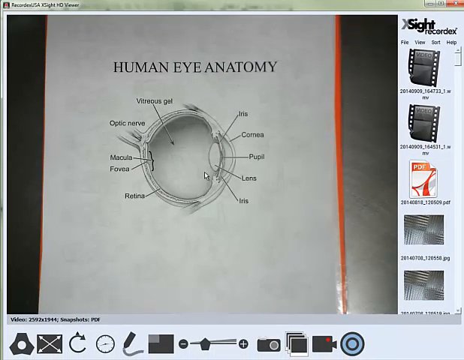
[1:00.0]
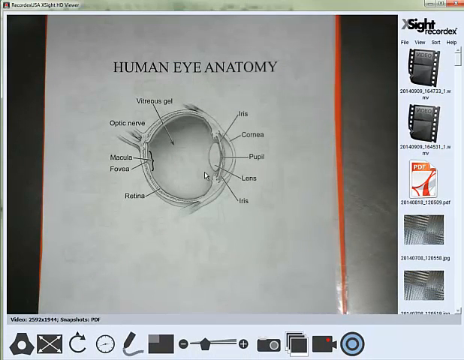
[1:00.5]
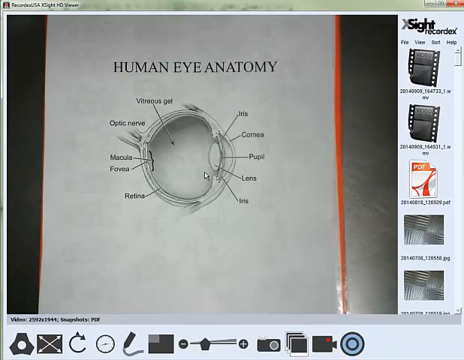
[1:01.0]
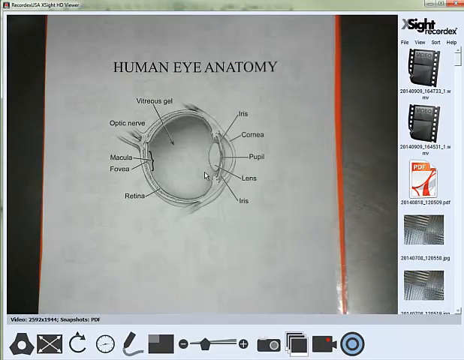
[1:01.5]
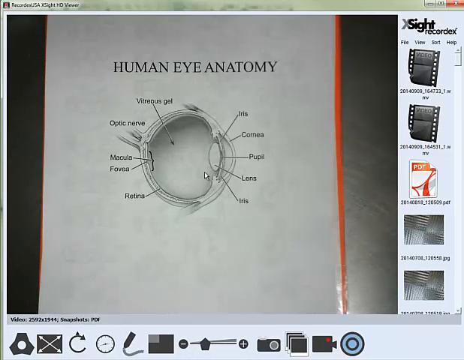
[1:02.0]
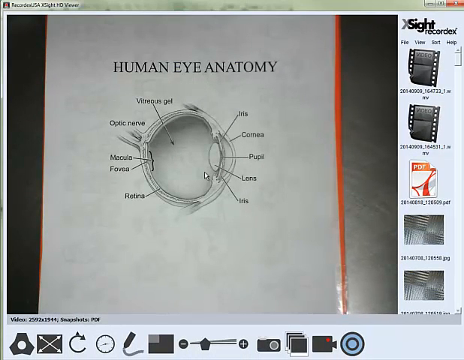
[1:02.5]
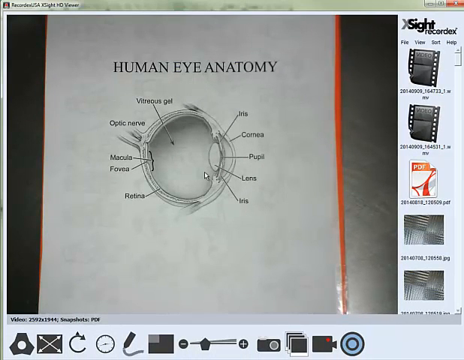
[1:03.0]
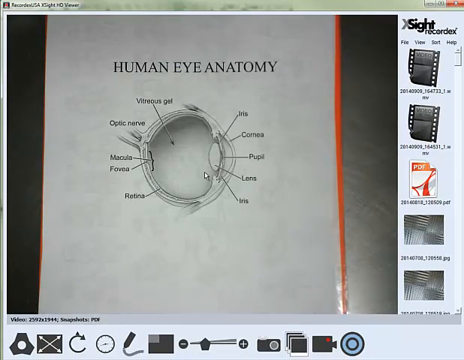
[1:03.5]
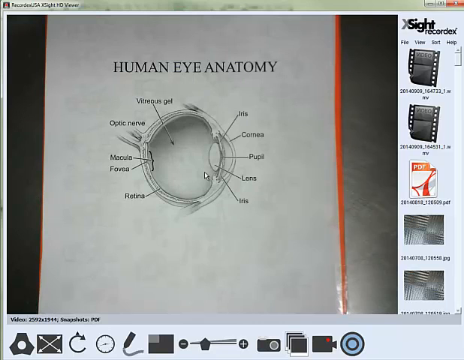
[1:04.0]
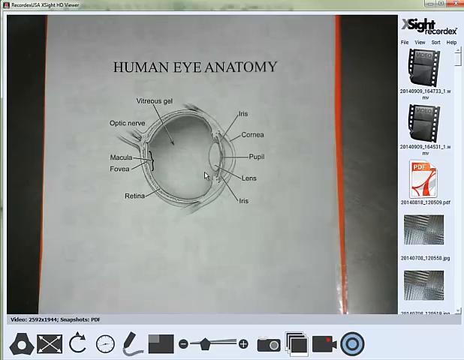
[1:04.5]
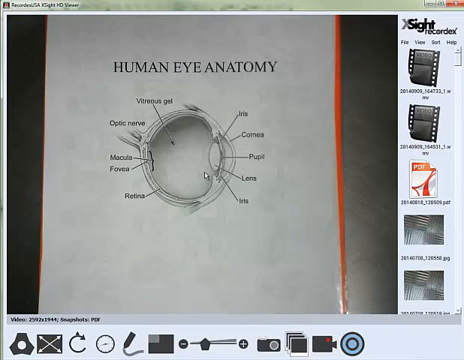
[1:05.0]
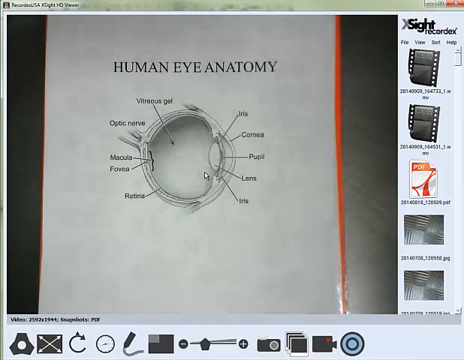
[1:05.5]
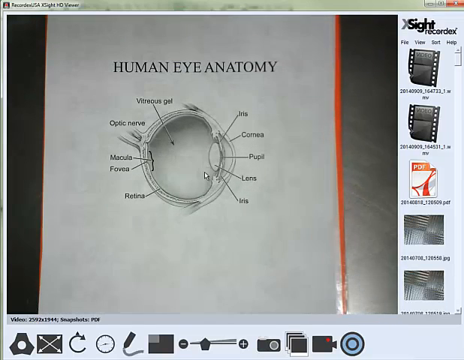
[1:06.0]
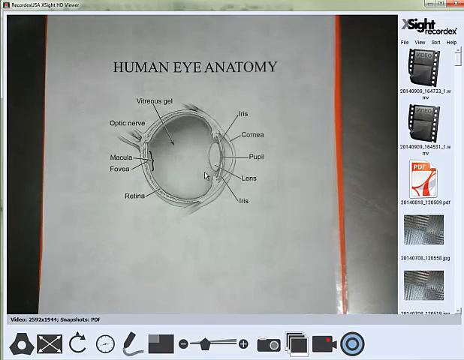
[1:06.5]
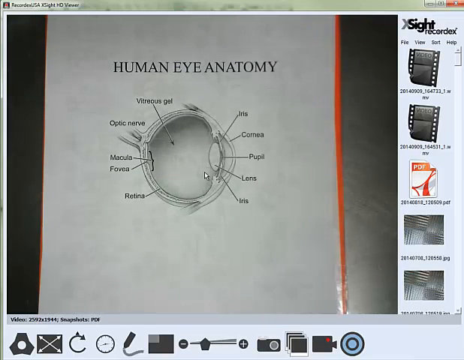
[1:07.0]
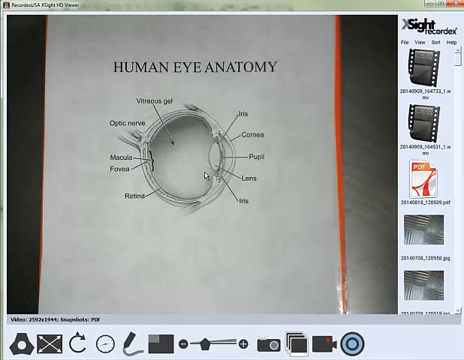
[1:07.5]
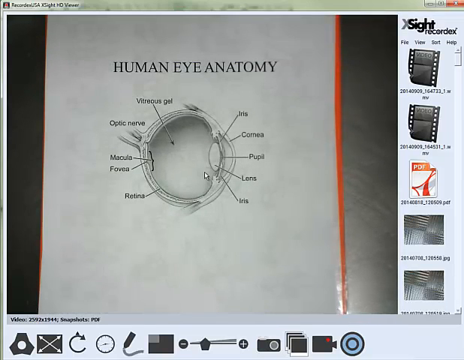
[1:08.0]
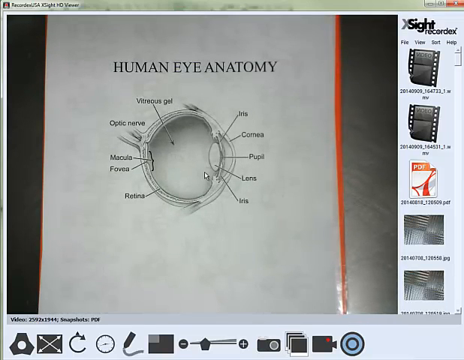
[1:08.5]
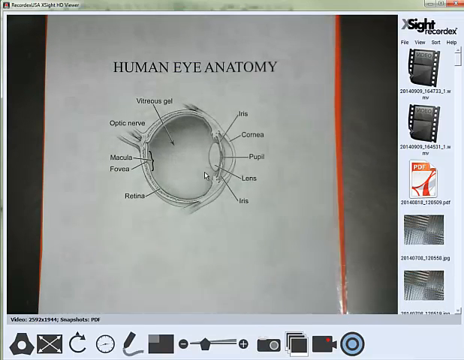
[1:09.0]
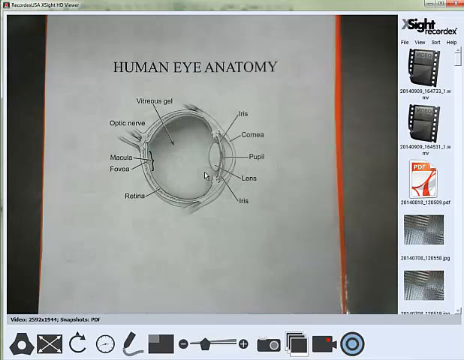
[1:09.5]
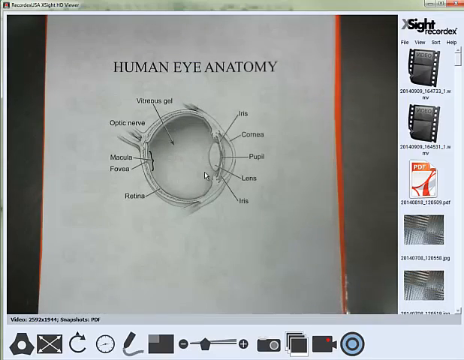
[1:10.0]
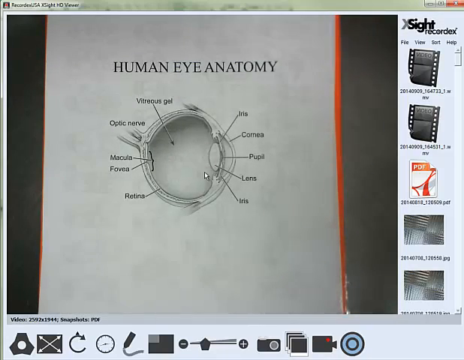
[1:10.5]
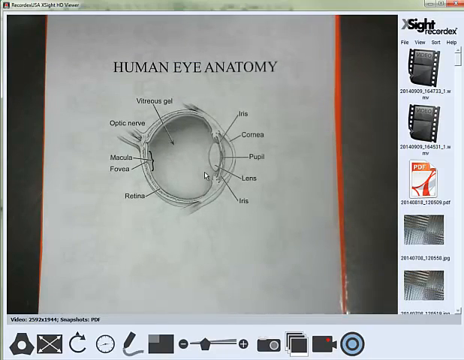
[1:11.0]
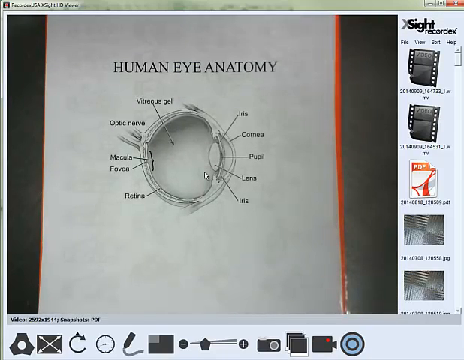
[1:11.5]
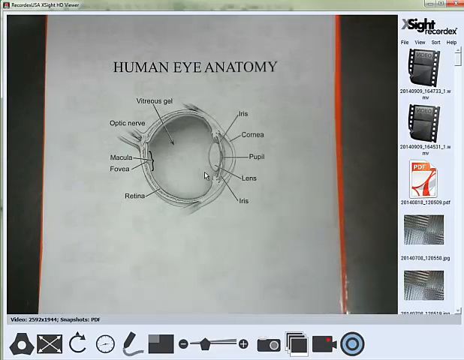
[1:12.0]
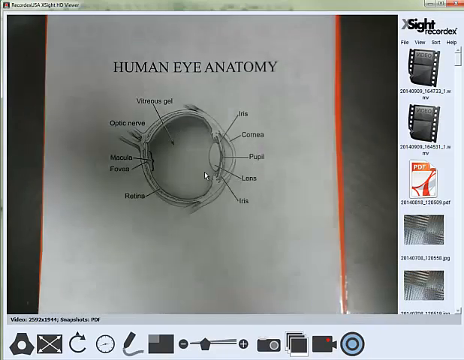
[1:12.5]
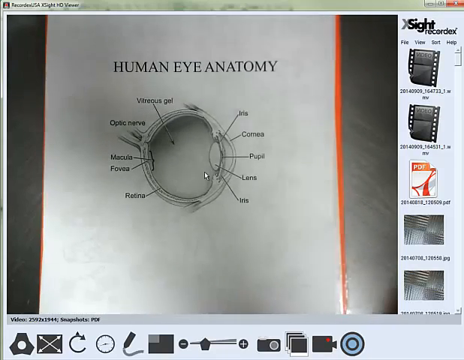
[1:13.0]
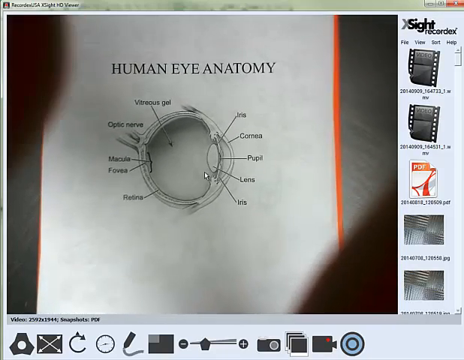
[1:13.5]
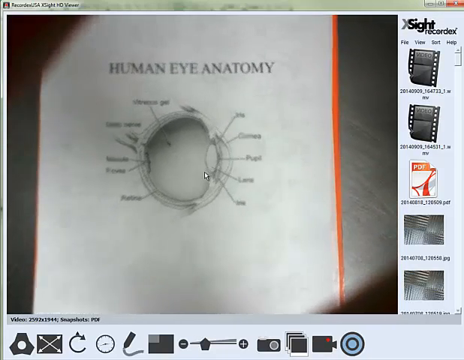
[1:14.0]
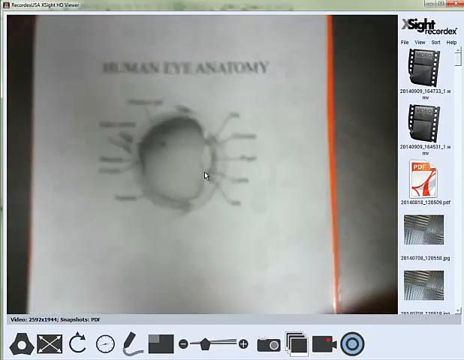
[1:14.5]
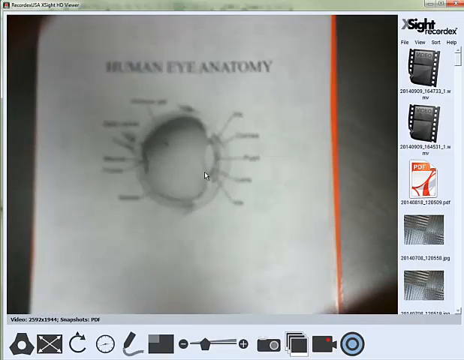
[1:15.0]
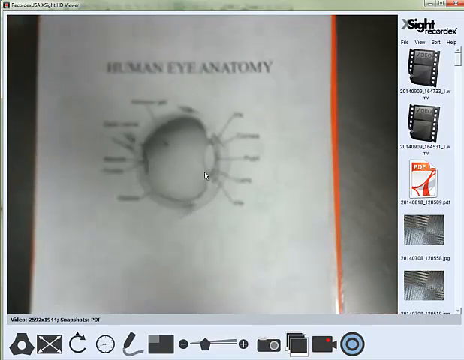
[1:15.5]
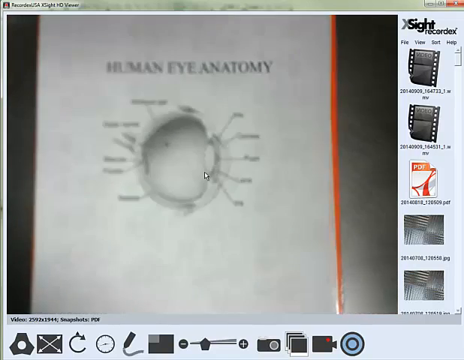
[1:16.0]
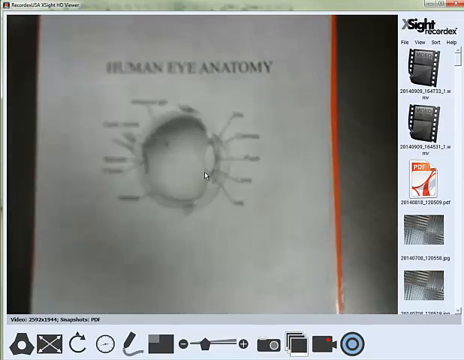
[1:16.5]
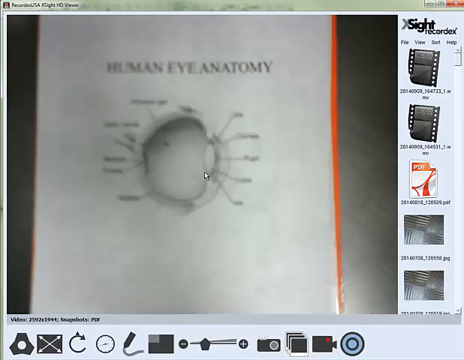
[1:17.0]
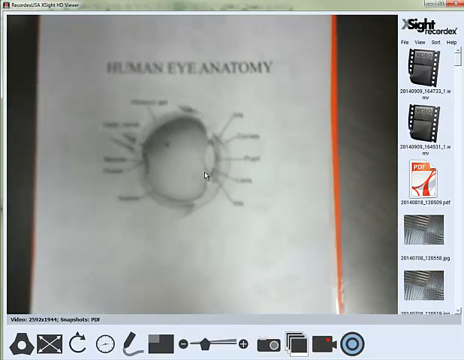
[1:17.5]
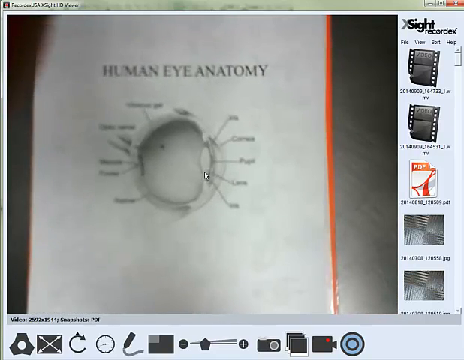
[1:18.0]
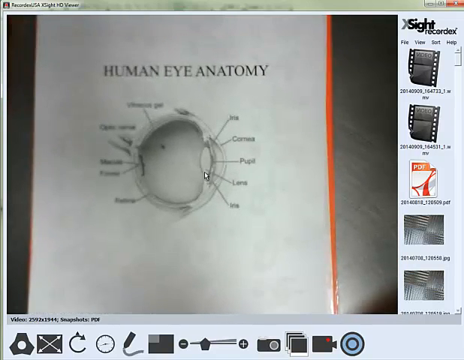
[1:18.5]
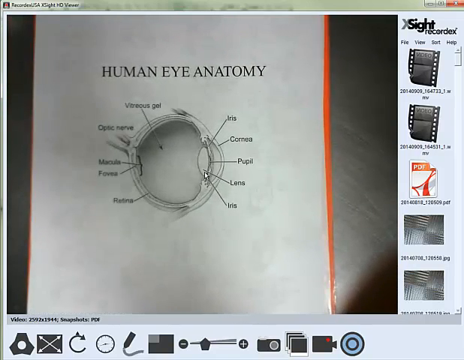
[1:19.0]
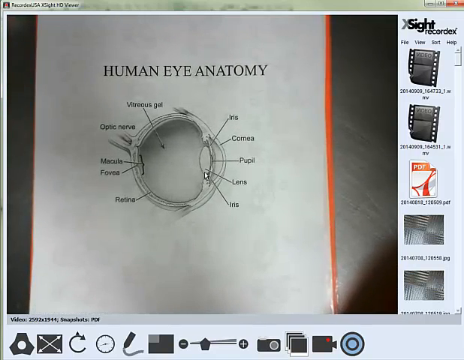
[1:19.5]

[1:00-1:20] The screen shows a gray surface with a white-looking book that says "Human Eye Anatomy" up top, with different areas on the eye labeled. On the right side is a white label that says "X Sight Recordex," with some different options below it. A white arrow goes over different sections of the screen, and it looks as though someone is trying to adjust something that is recording this page. The screen gets a little foggy and then clears, showing the labeled sections such as iris, corneas, pupil, lens, retina and optic nerve, each with lines drawn to the corresponding area on the picture of the eye.